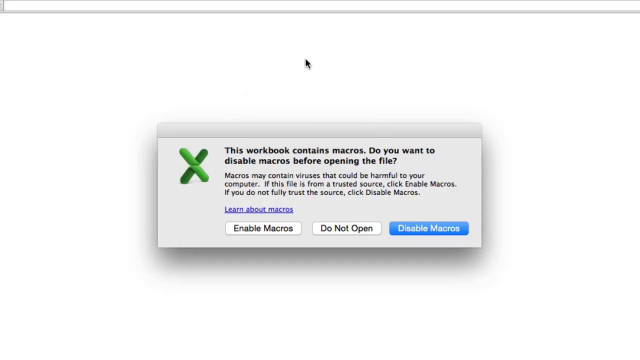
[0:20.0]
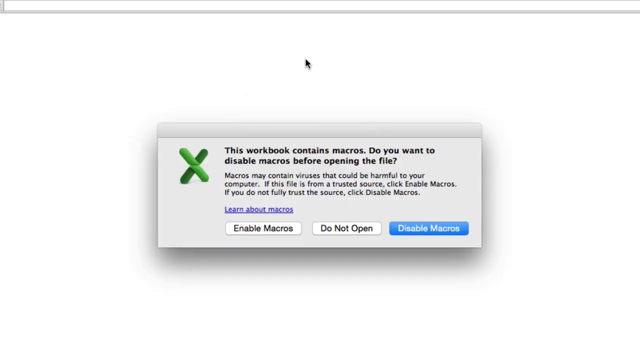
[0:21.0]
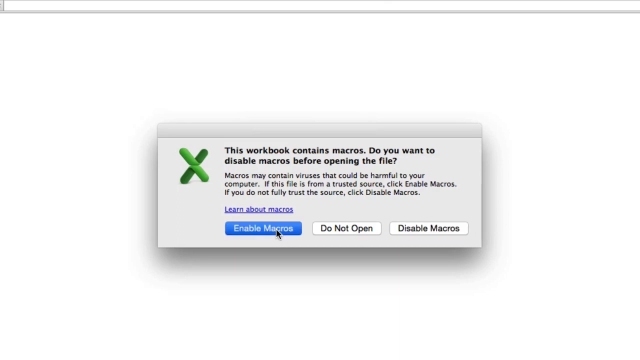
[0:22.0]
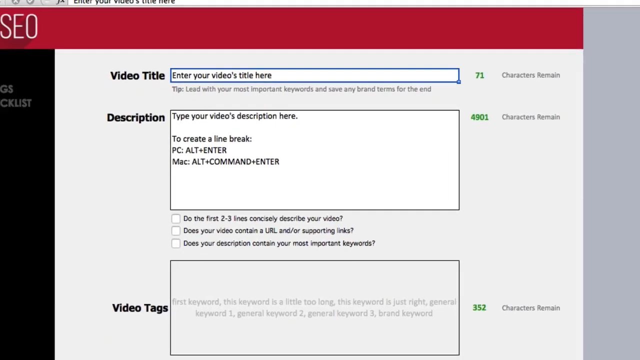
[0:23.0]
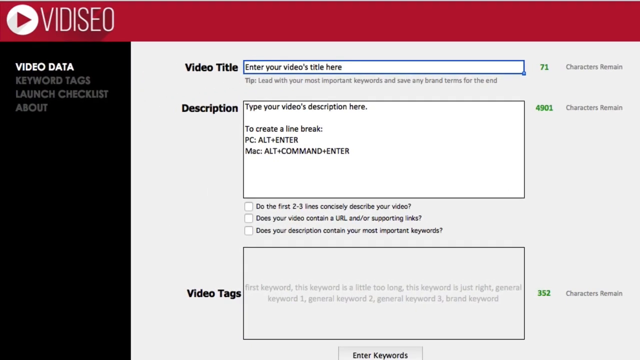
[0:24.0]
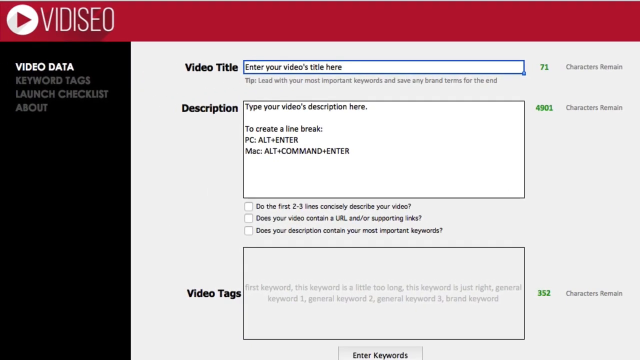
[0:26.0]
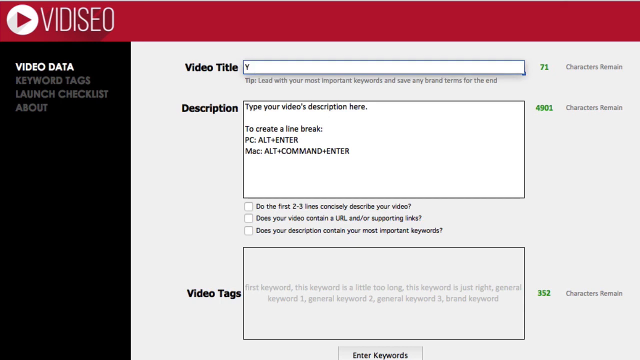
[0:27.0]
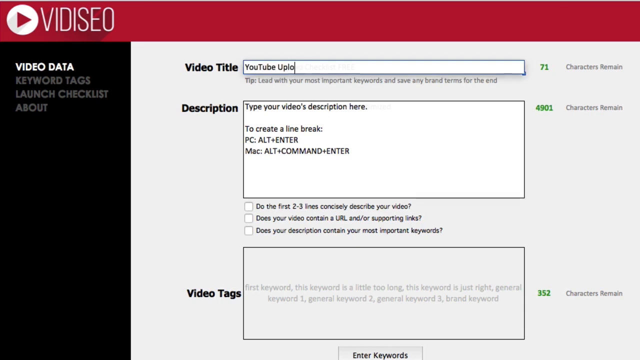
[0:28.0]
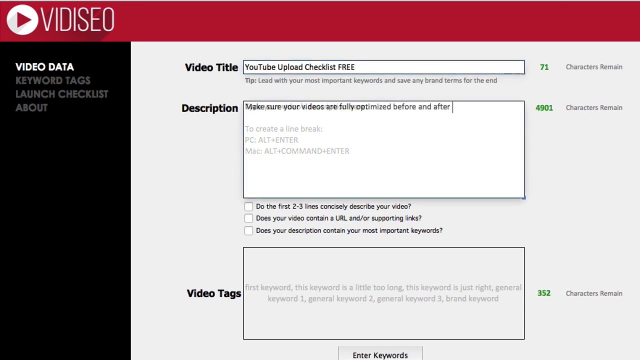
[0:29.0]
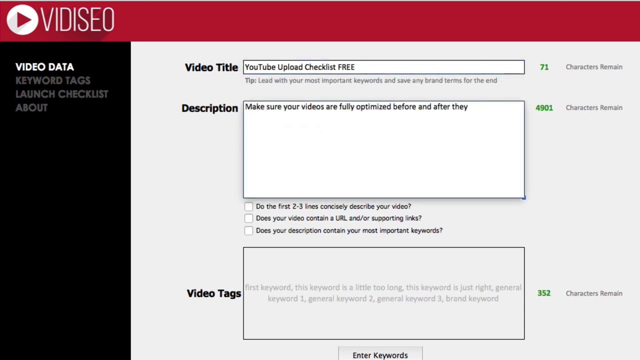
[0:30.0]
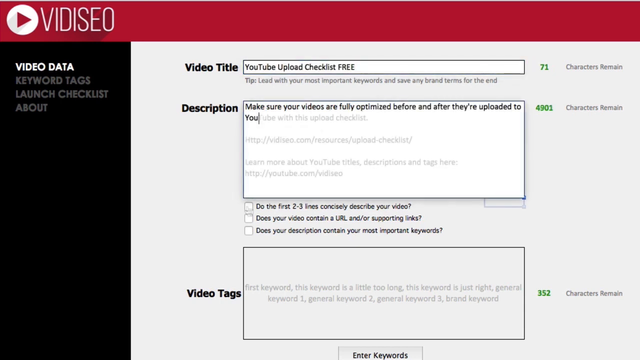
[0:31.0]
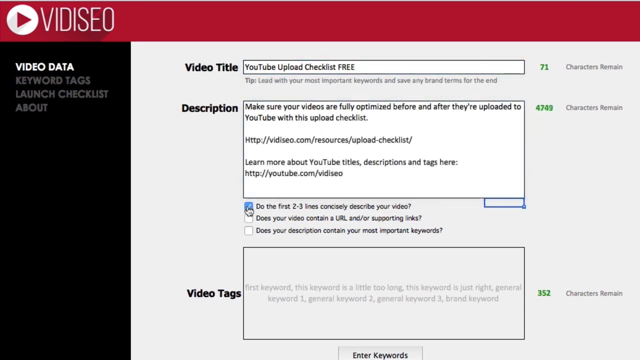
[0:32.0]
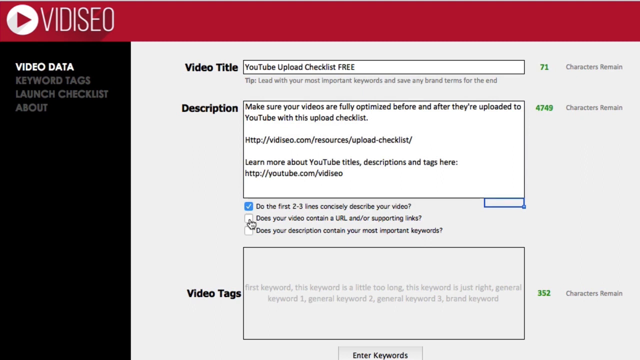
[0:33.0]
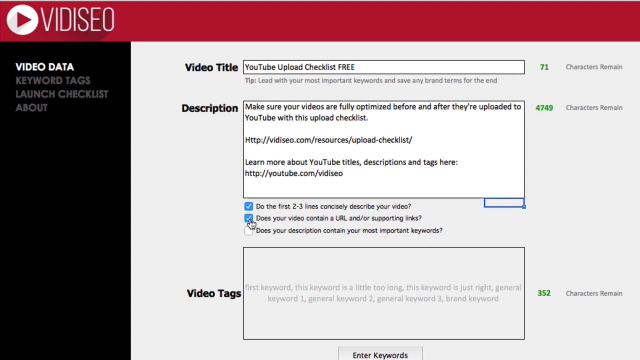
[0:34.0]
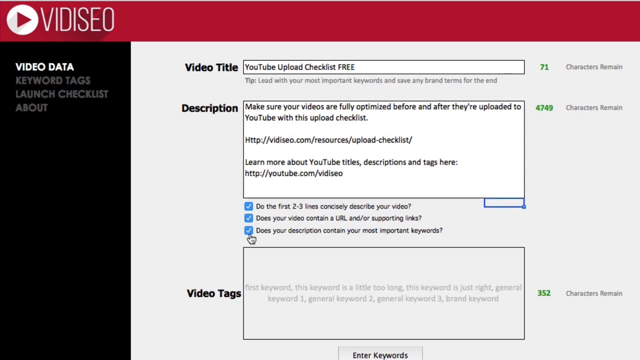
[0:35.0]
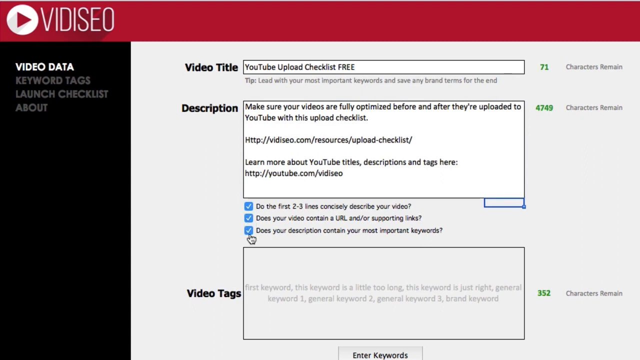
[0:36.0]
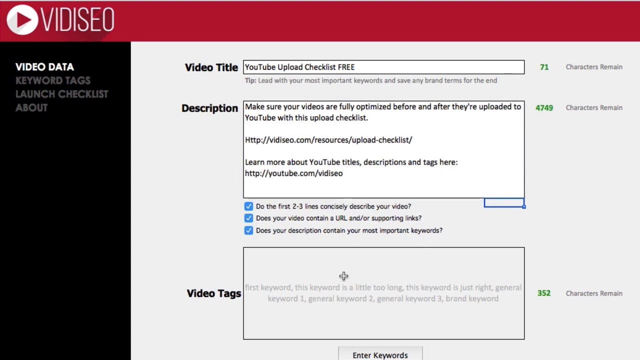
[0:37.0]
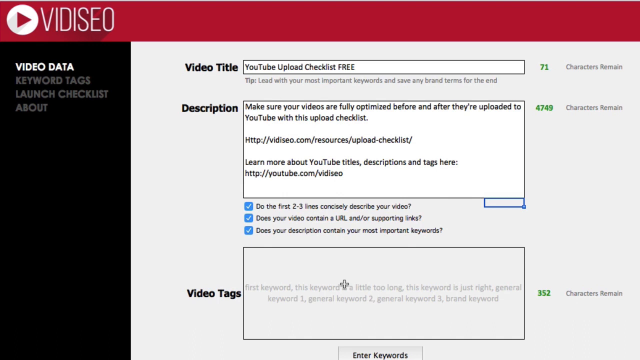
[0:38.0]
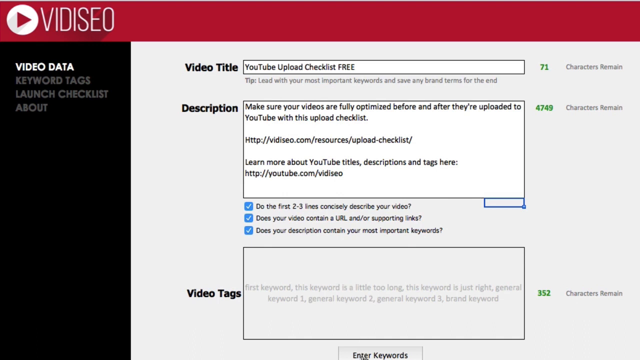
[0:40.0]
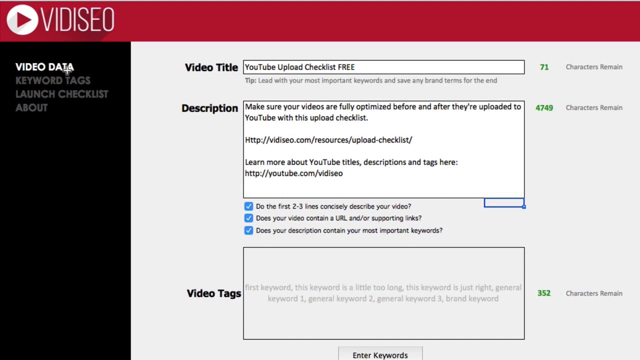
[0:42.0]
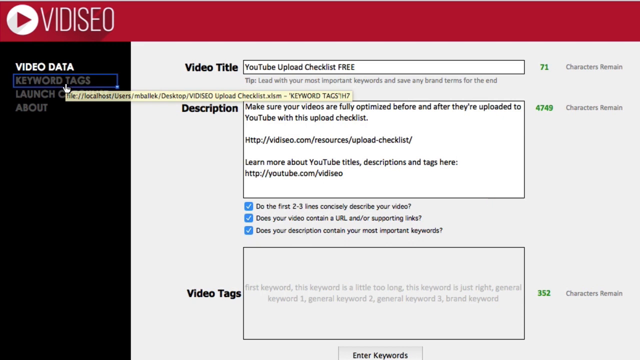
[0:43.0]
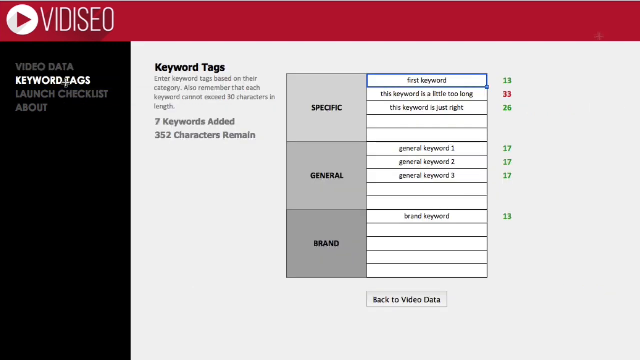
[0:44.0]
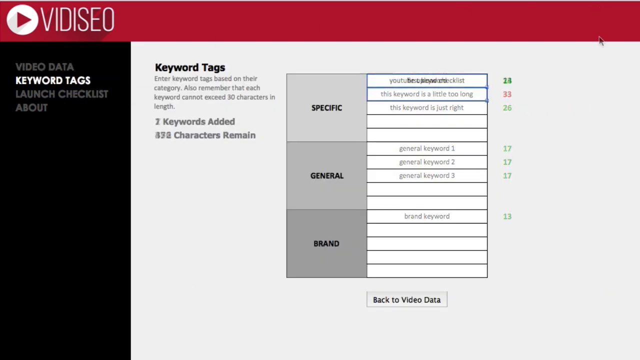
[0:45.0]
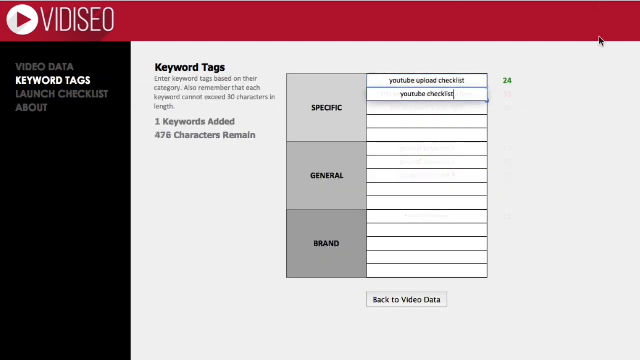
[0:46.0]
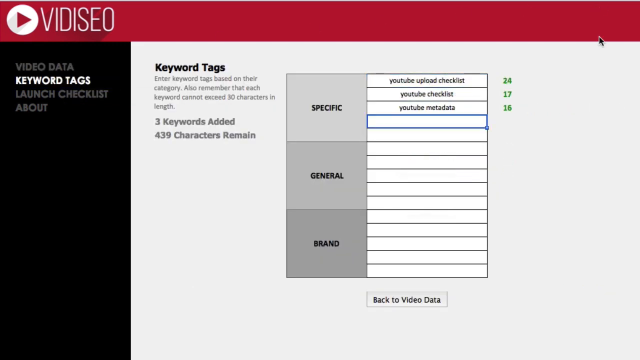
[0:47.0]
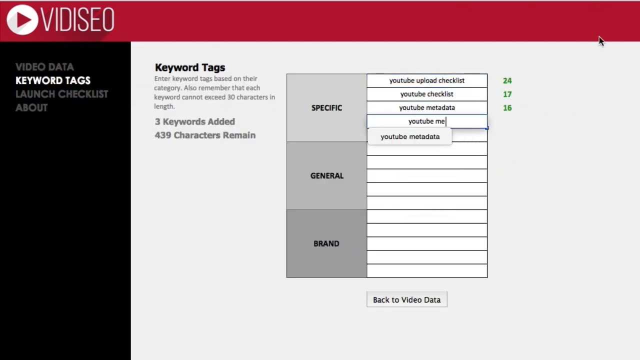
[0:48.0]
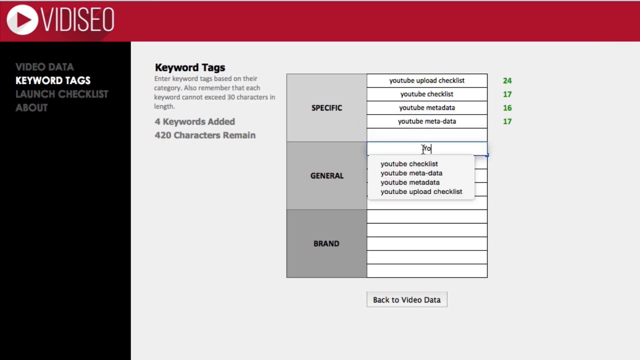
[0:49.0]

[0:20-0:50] Macros are enabled, and the view scrolls to a video data page. It has a field for the video title reading "enter your video's title here" and a description field reading "type your video's description here," along with instructions to create a line break: Alt+Enter on PC and Alt+Command+Enter on Mac. Below is a video tags section for keywords. Other categories on the page read "keyword tag," "launch checklist," and "about." Three boxes appear between the description and video tags, reading questions including "Does your video contain a URL and/or supporting links?" and "Does your description contain your most important keywords?" The screen is gray. Someone types "YouTube upload checklist free" and clicks some of the boxes. Another box at the bottom reads "enter keywords," and the right column reads "characters remain."